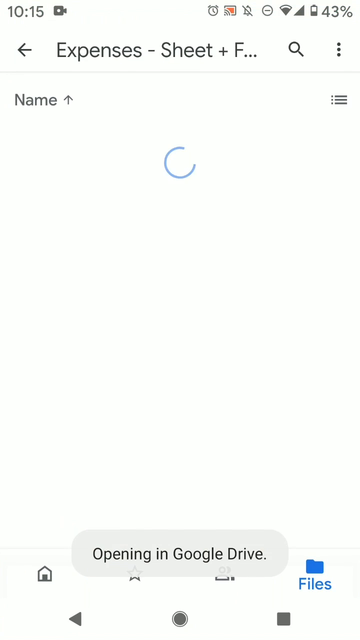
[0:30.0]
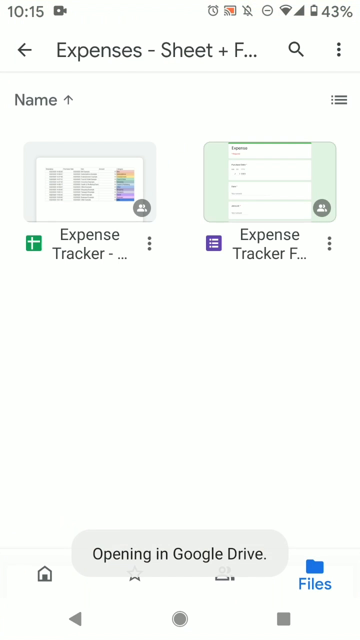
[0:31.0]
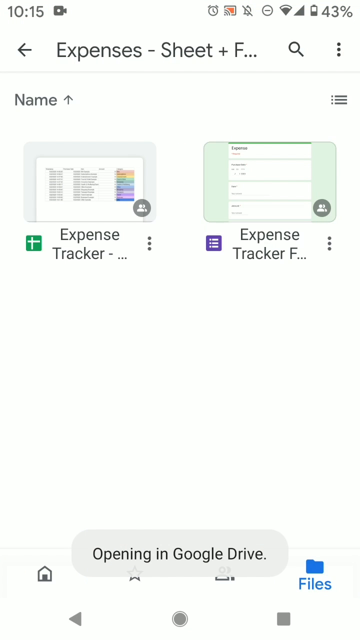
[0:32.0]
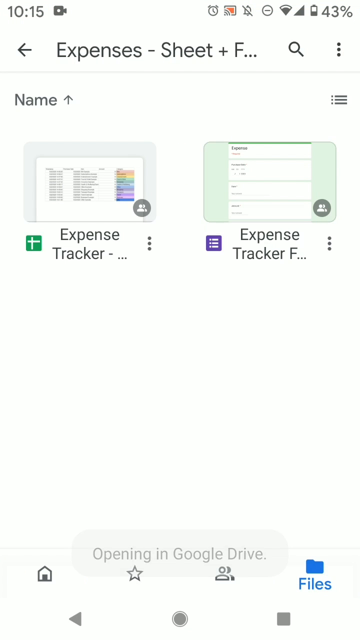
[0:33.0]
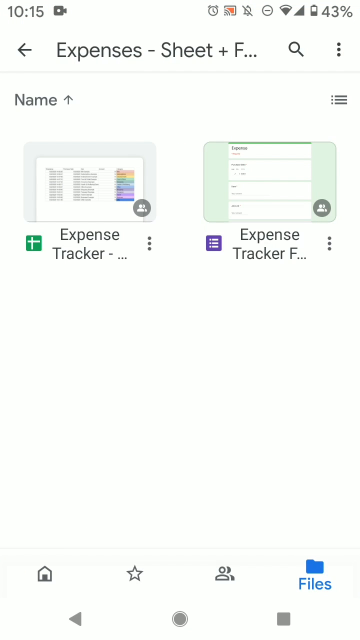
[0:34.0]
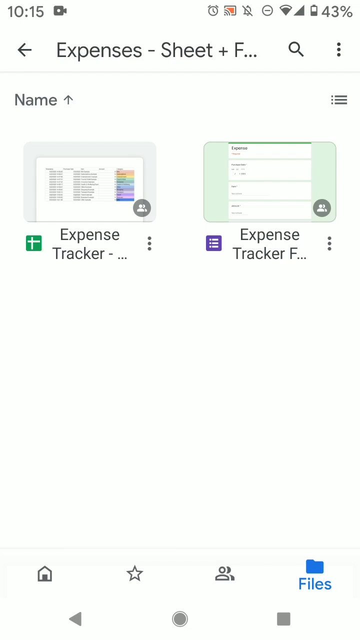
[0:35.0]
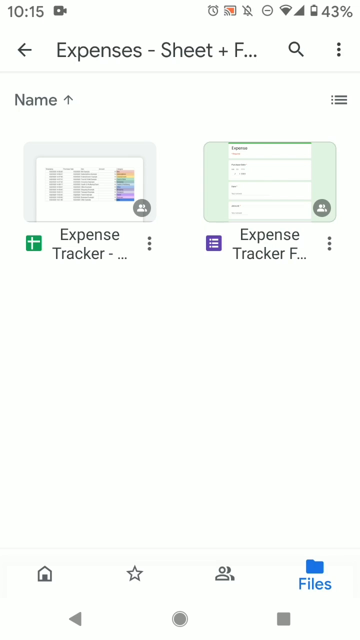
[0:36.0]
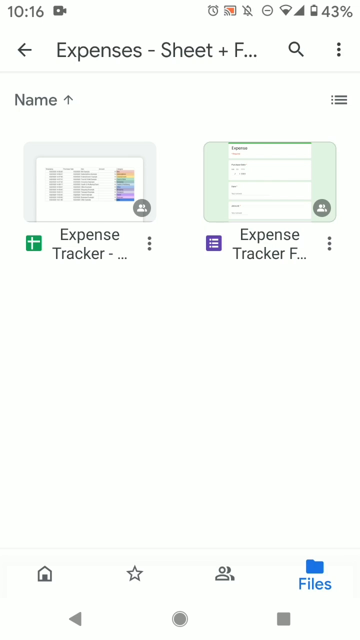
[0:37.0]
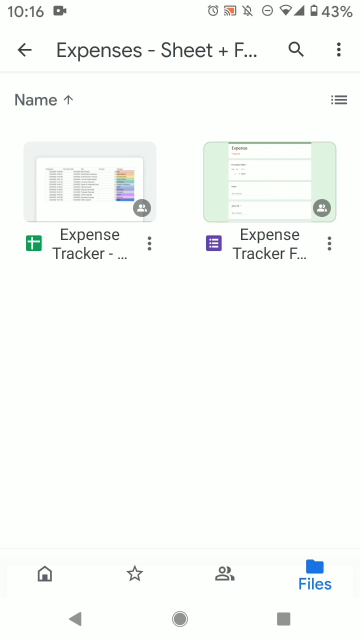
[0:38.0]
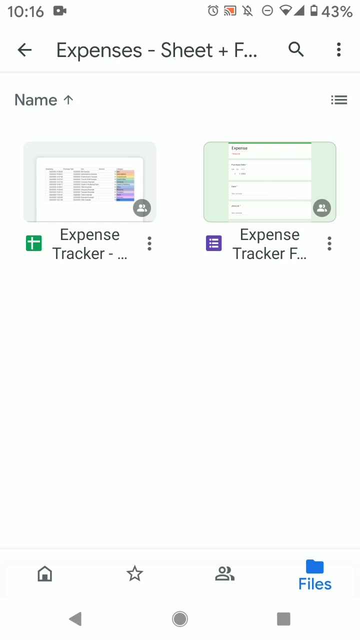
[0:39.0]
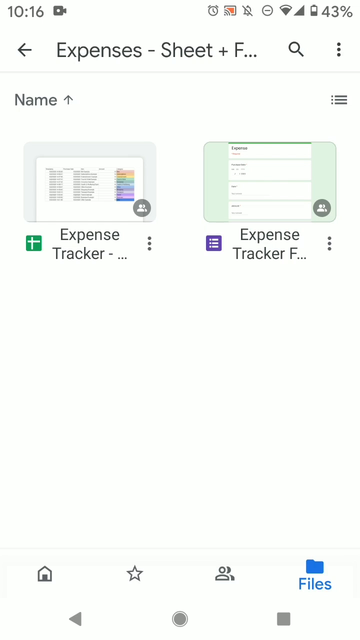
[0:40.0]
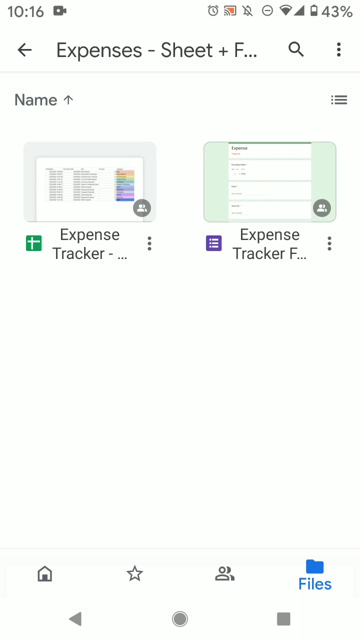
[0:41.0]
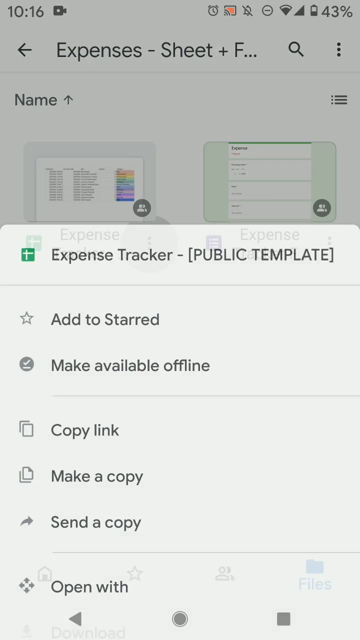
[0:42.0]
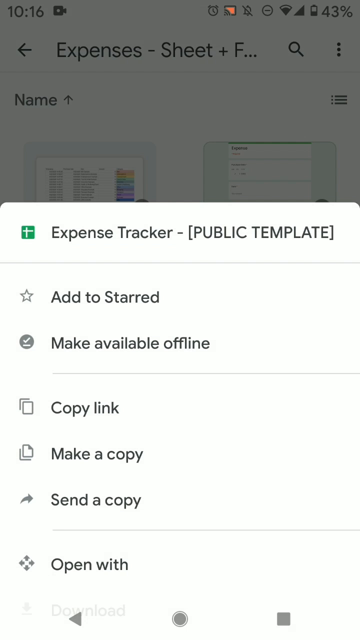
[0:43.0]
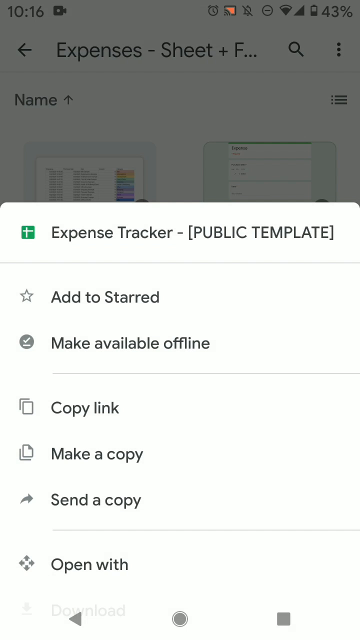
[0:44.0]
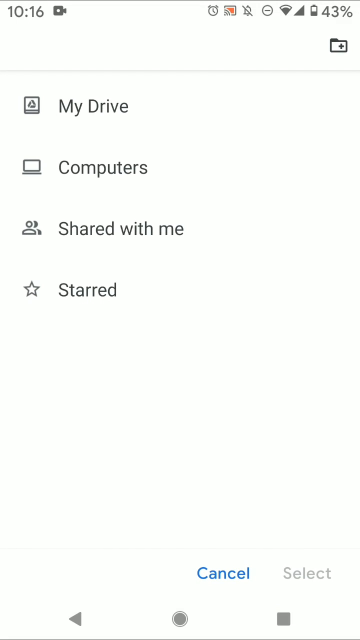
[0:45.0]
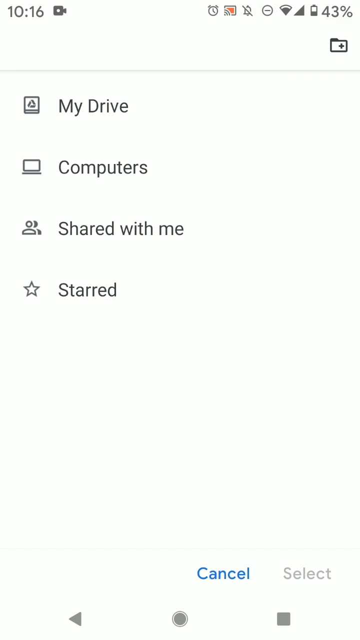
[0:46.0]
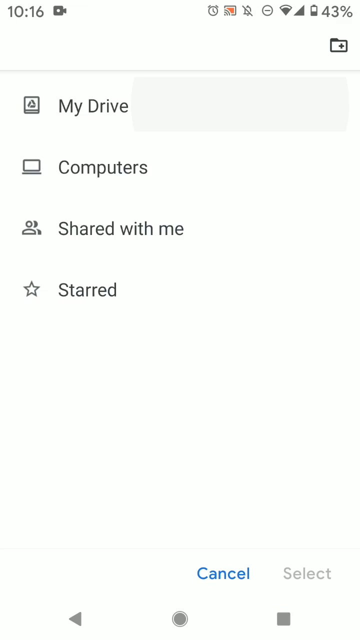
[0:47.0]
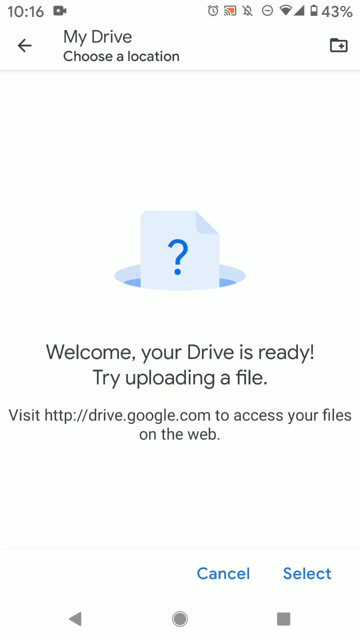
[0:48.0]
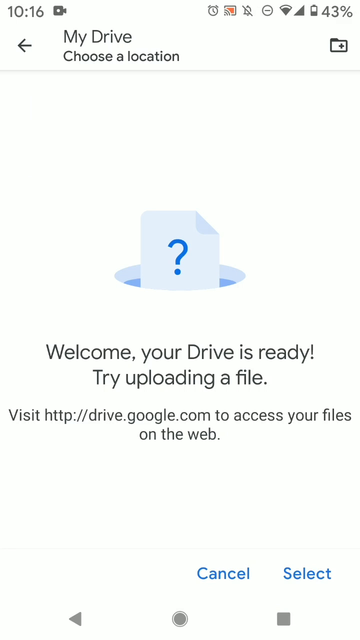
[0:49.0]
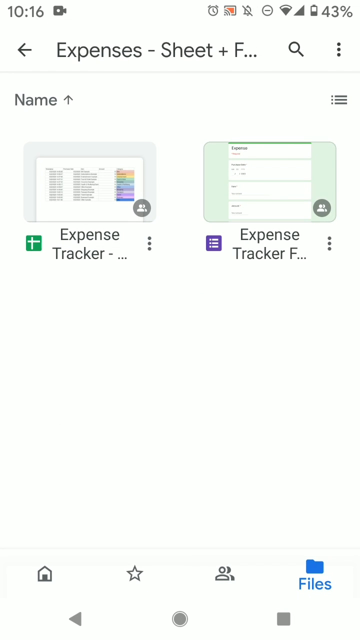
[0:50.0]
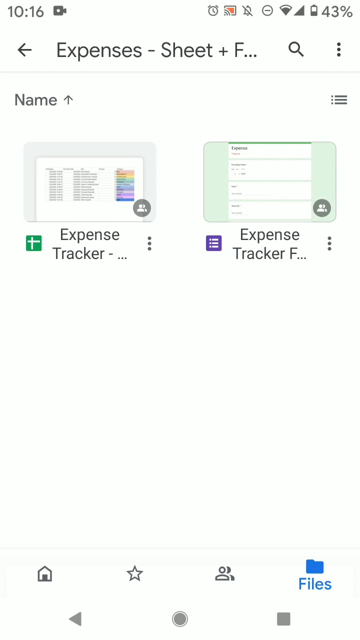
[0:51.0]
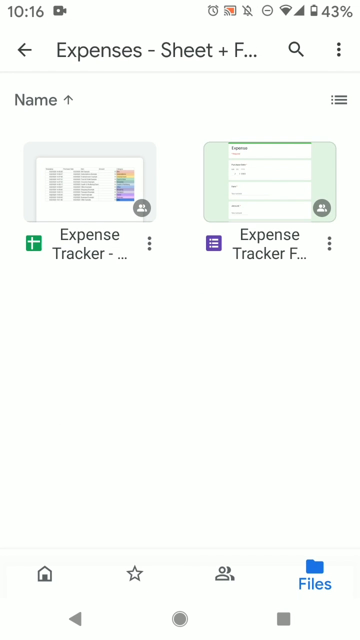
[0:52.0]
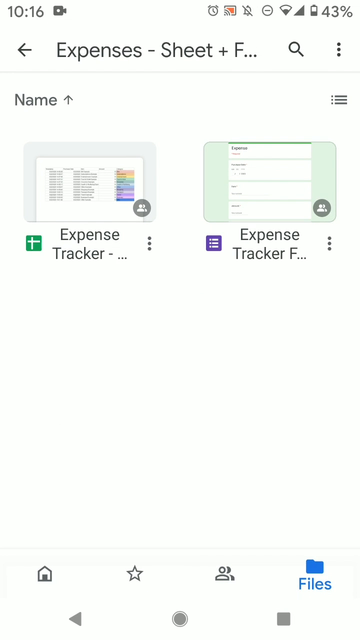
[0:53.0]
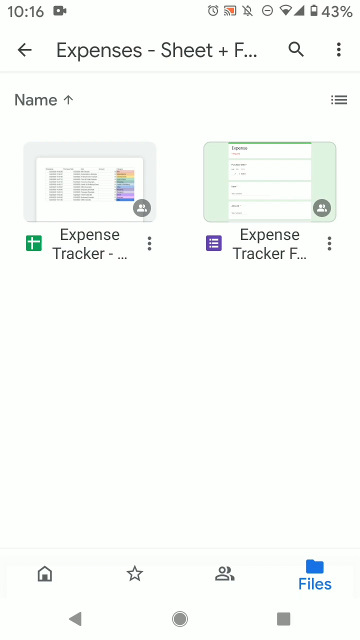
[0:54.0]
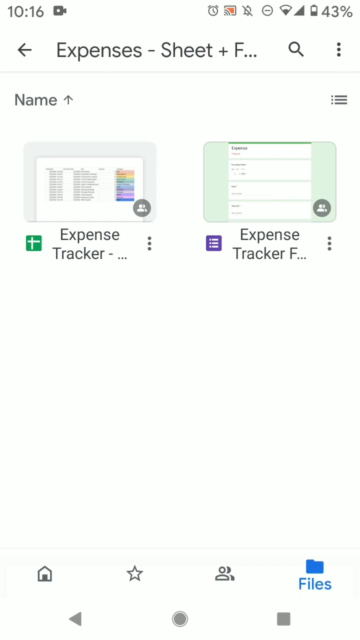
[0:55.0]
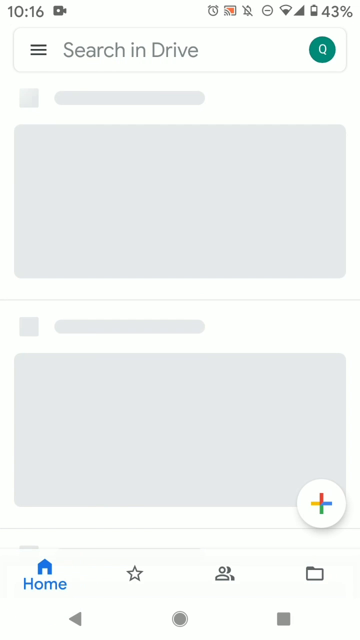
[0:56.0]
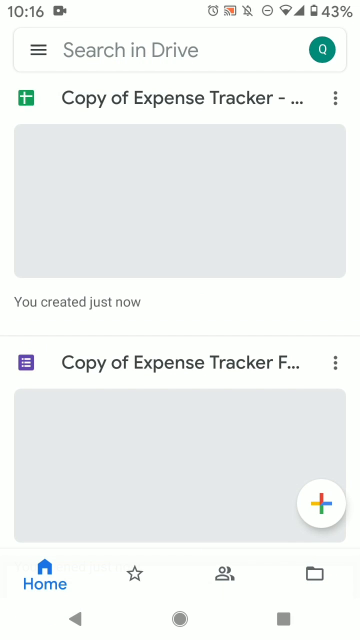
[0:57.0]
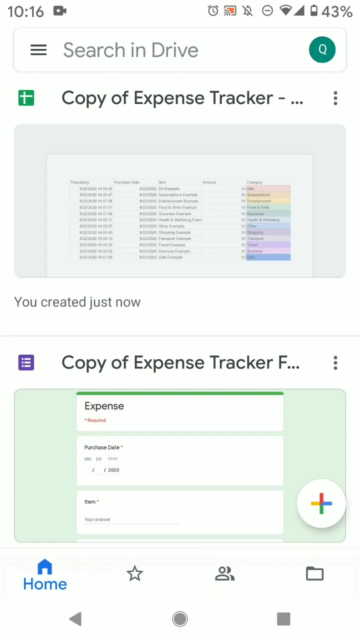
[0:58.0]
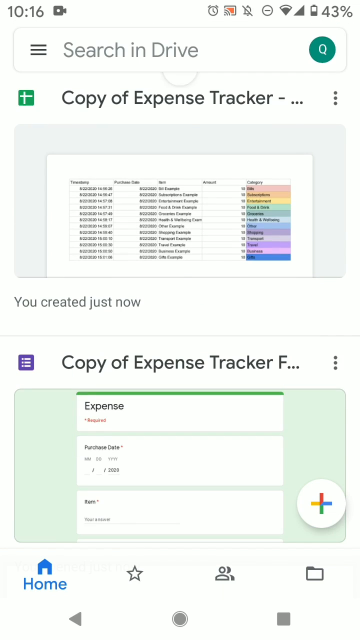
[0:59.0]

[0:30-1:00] Multiple icons are at the very top of the interface. Below, on a white background, are an arrow pointing left, some text followed by an ellipsis, a magnifying glass, and what appears to be a three-dot menu icon, then what appears to be a sorting option and a menu icon. A square contains what appears to be some sort of expense tracker with text and colors, and below it is "expense tracker" followed by dots; to the right is "expense tracker" with green text. Further down is what appears to be a grayish oval with text reading "opening in Google Drive", followed by various icons. What appears to be the expense tracker public template is then clicked, showing various icons and text: a star with "add to start", a world icon, a line coming across, an icon of copy sheets stacked on top of each other with "copy link", then "make a copy", "send a copy" and "open with". The screen transitions to a list with "my drive", "computers", "shared with me" and "start", with "cancel" and "select" at the very bottom right. Text reads "welcome. Your drive is ready. Try uploading a file. Visit http drive.google.com to access your files on the web." The screen then transitions to what appears to be the copies.